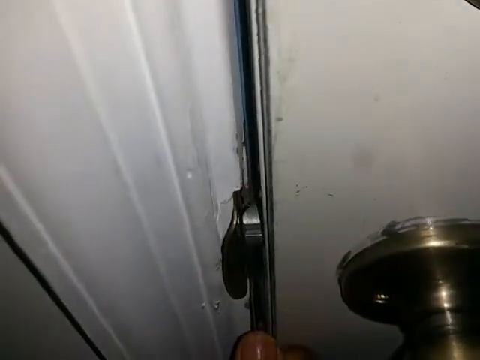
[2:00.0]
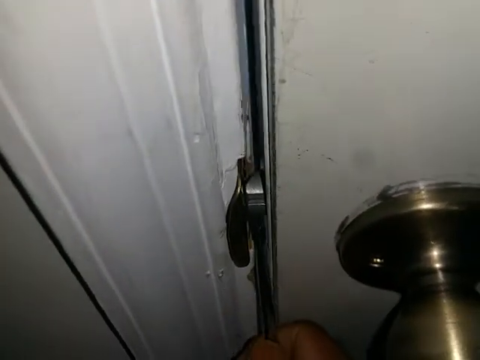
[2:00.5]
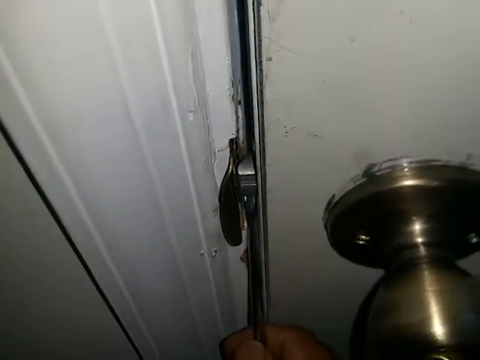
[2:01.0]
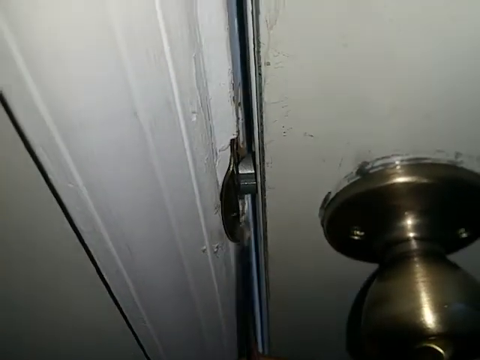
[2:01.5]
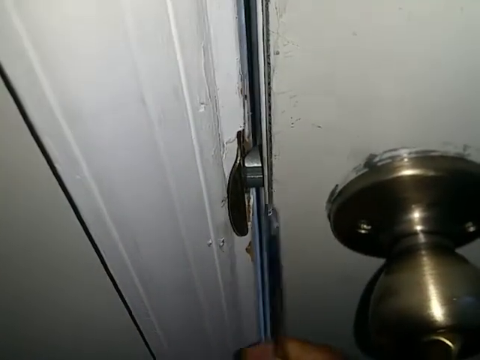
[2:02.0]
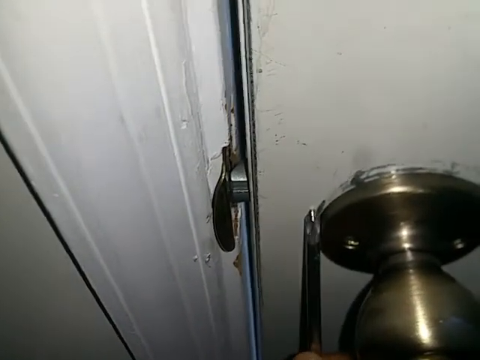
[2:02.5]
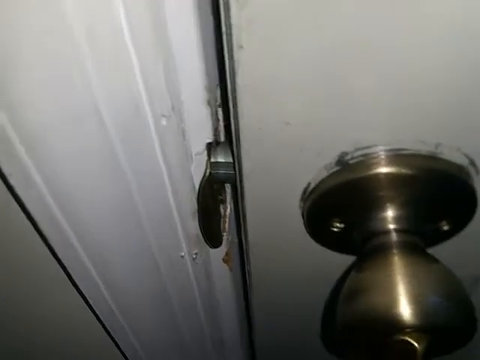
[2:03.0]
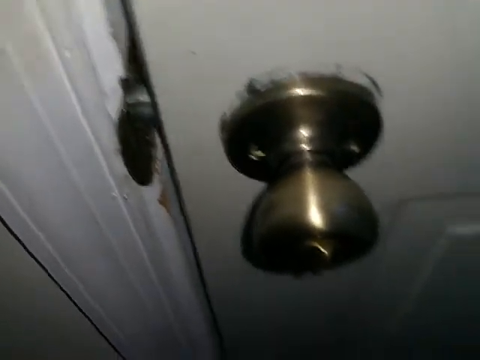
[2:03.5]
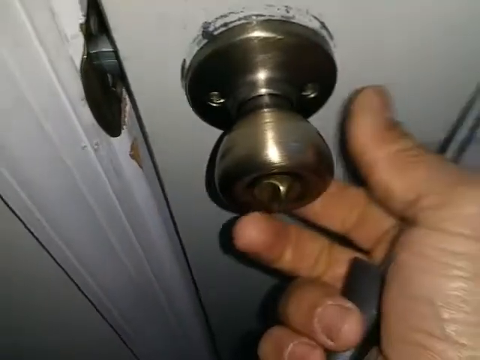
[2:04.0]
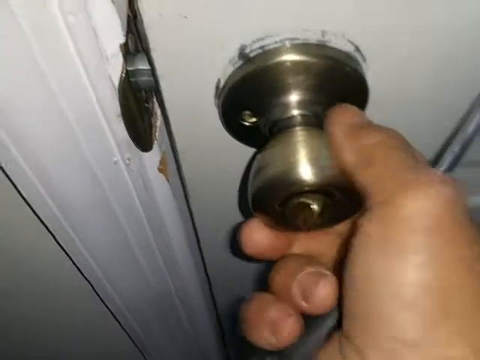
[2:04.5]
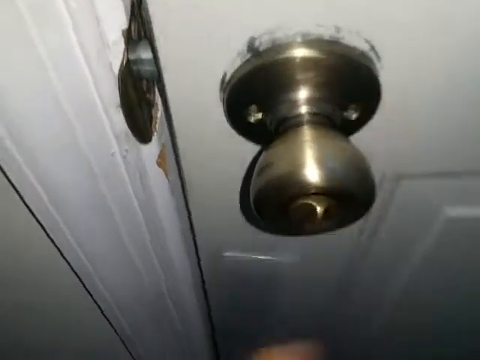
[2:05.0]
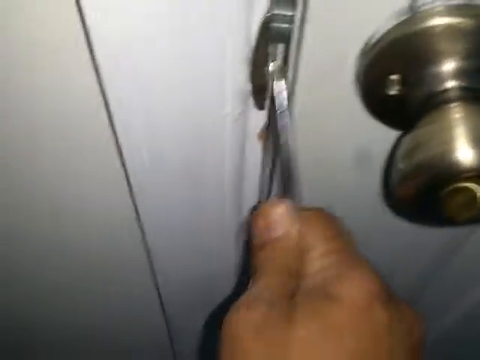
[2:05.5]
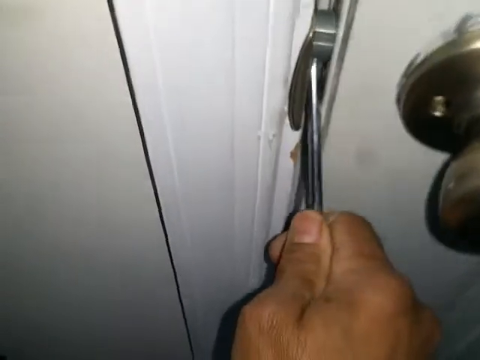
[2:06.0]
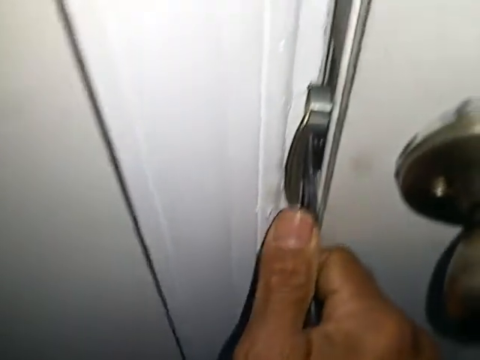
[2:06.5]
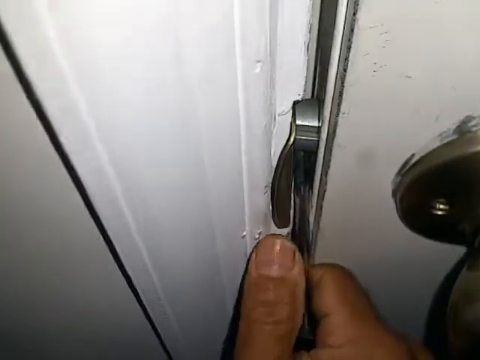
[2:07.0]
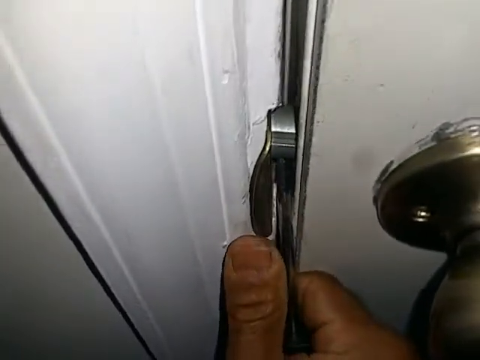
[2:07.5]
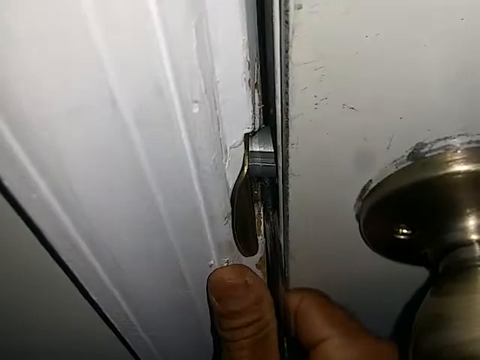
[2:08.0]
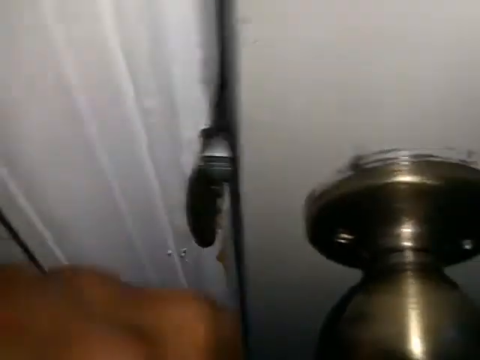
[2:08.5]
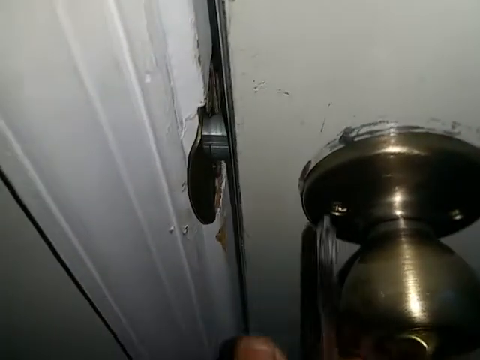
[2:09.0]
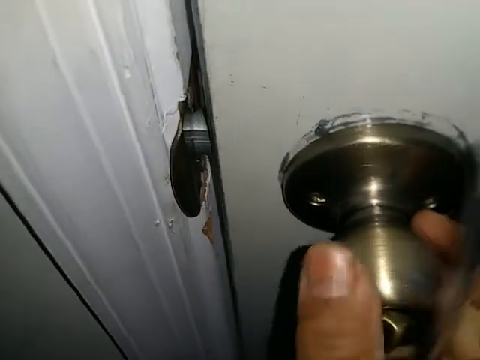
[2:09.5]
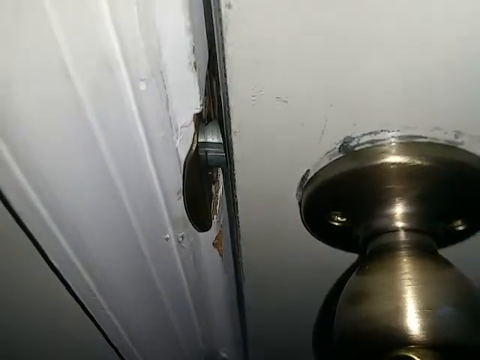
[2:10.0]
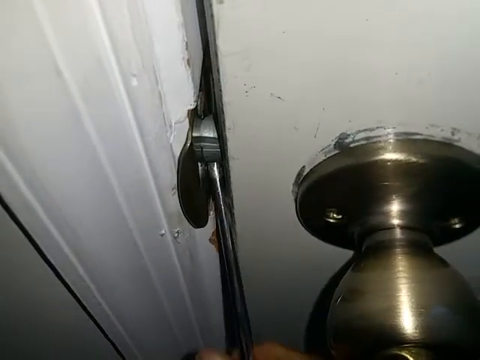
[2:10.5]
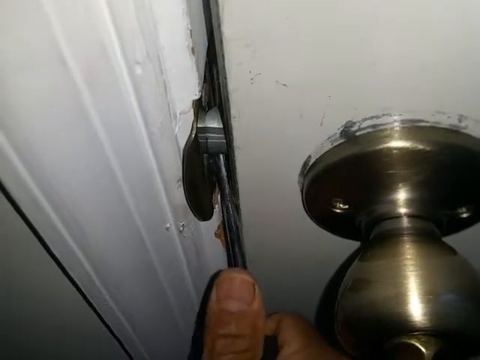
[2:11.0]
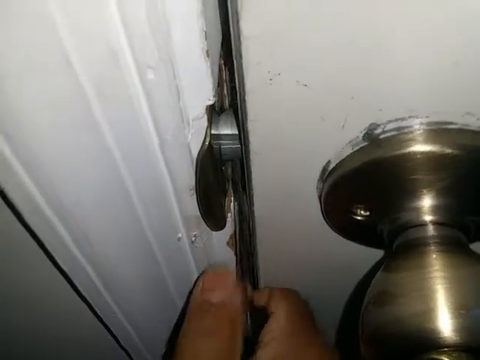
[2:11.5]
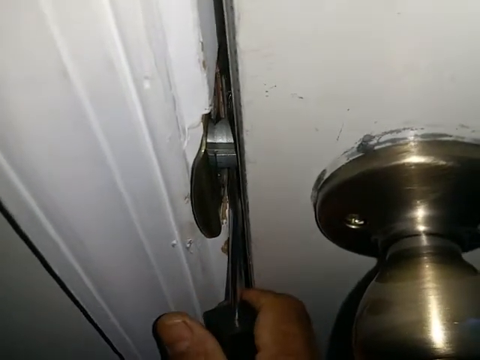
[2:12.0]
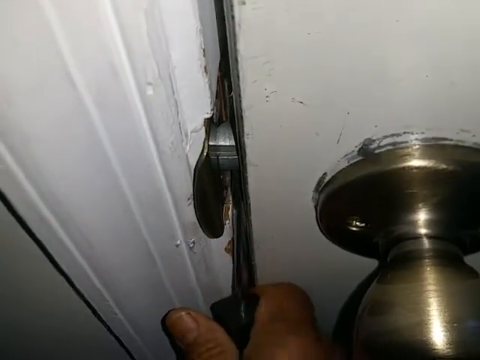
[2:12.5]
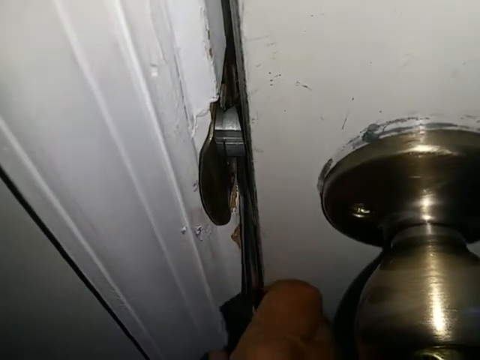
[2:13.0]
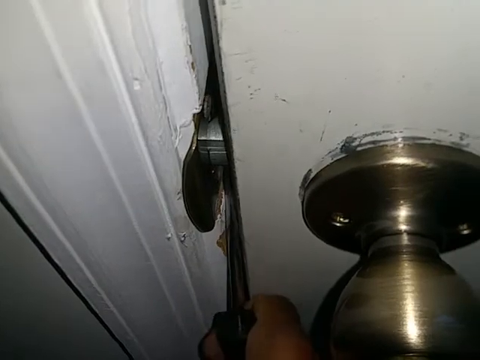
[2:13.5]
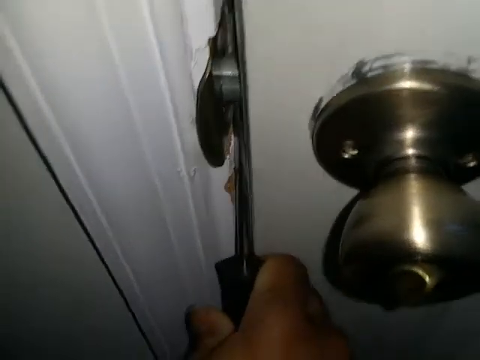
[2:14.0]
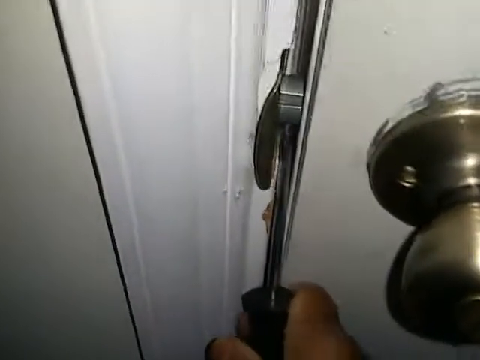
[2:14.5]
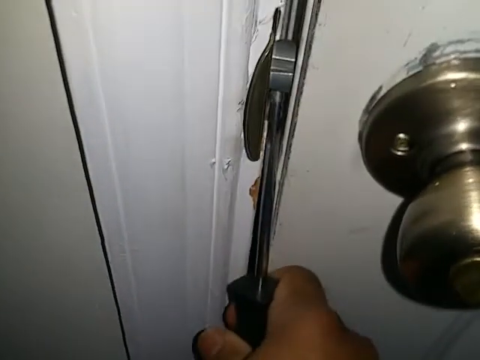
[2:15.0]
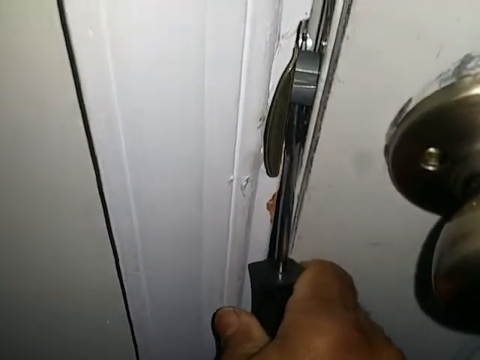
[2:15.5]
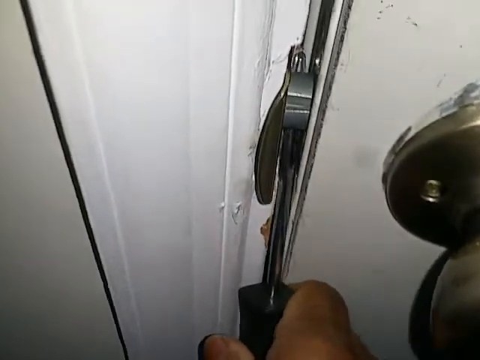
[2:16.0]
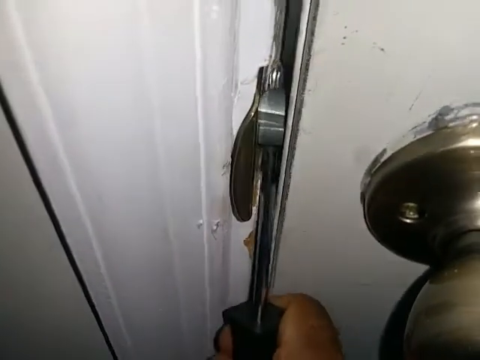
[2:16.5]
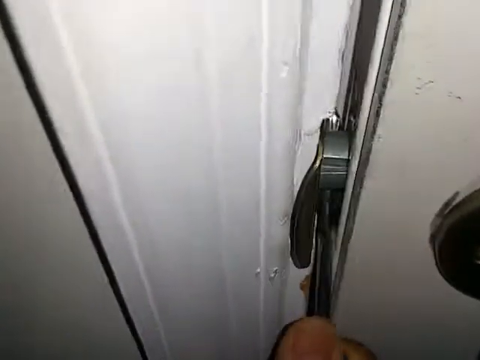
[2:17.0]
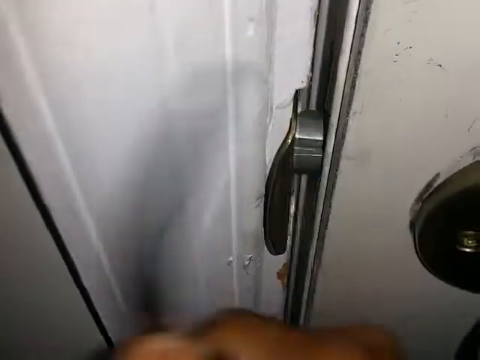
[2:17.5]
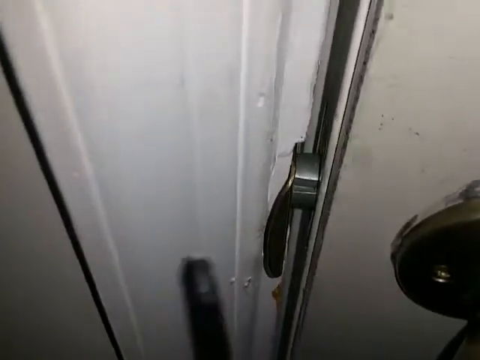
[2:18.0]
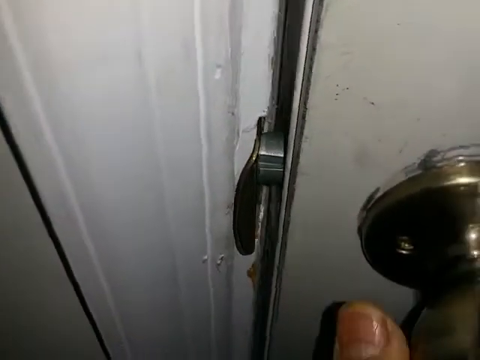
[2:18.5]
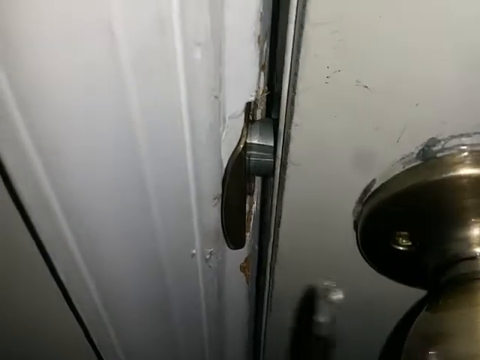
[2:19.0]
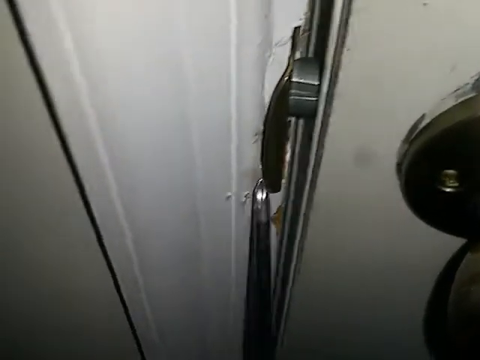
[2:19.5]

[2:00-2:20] The interior door latch and the Phillips head screwdriver are shown, and the door is pushed closed. The man wiggles the interior doorknob with his right hand, then pushes the Phillips head screwdriver under the door latch, into the gap between the door frame and the door. The screwdriver is angled upward behind the latch and pushed toward the door, its tip toward the camera, activating the latch, and the door opens. The doorknob still works and the door appears locked, but the locking mechanism does not hold the door shut against the screwdriver.